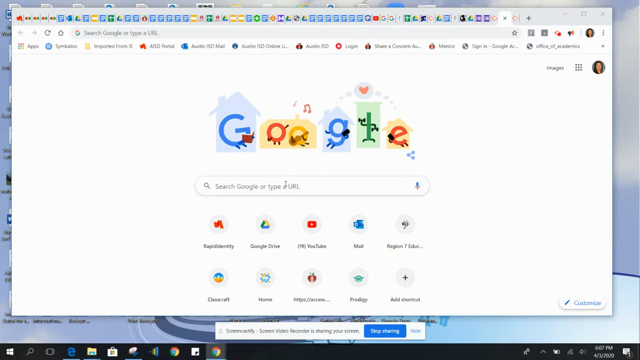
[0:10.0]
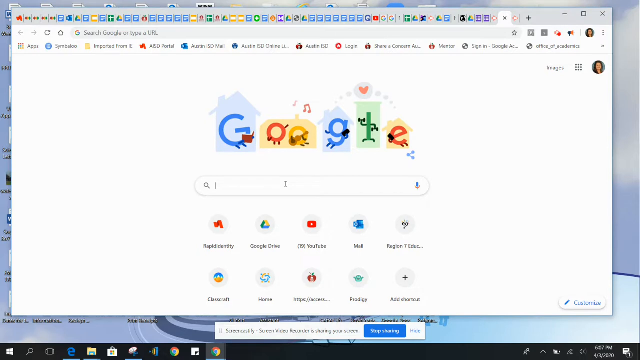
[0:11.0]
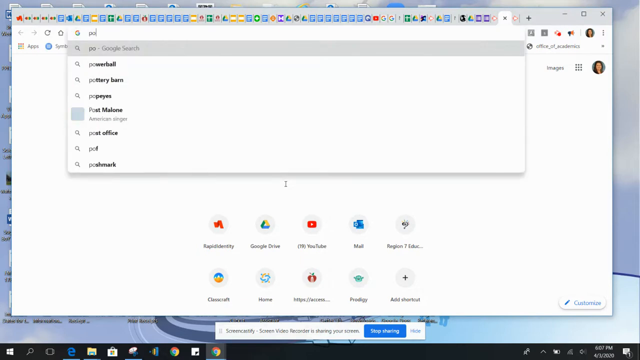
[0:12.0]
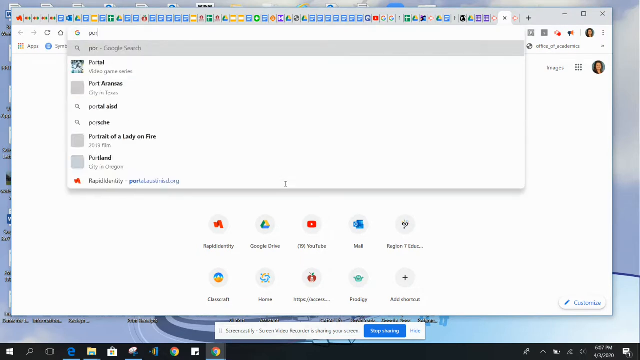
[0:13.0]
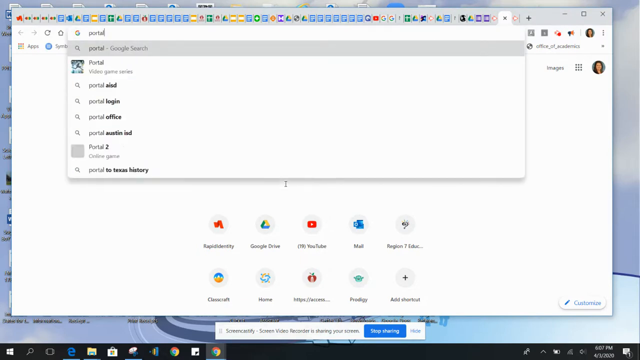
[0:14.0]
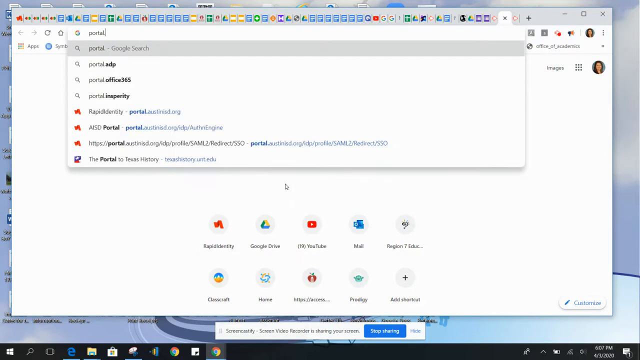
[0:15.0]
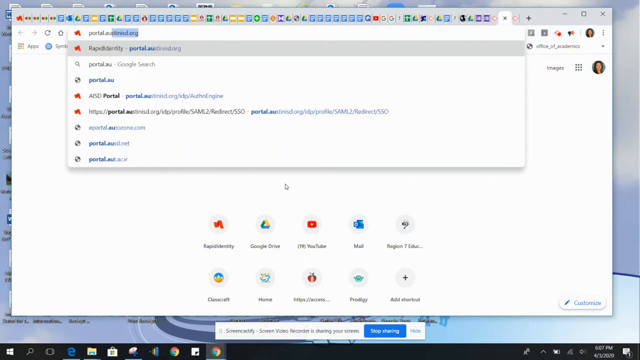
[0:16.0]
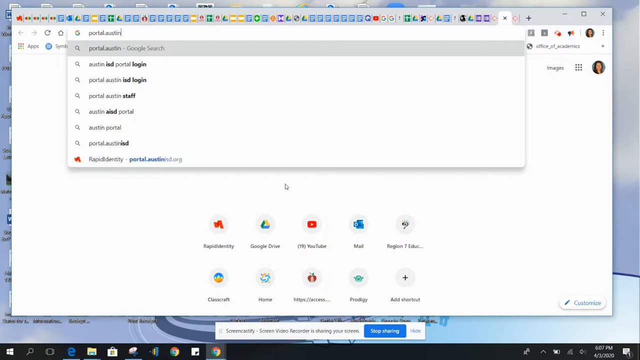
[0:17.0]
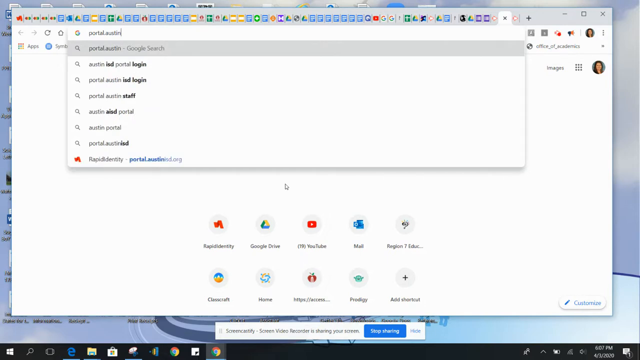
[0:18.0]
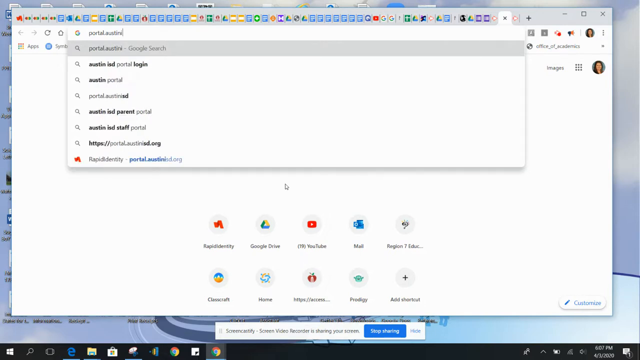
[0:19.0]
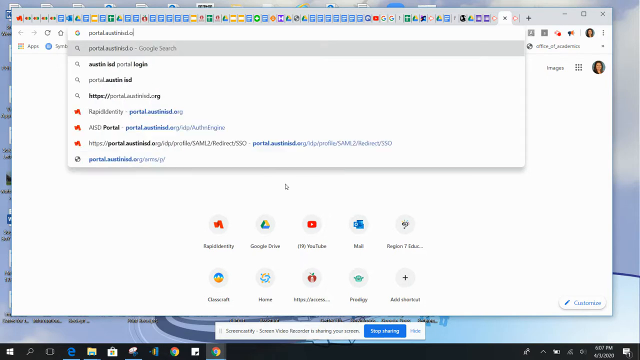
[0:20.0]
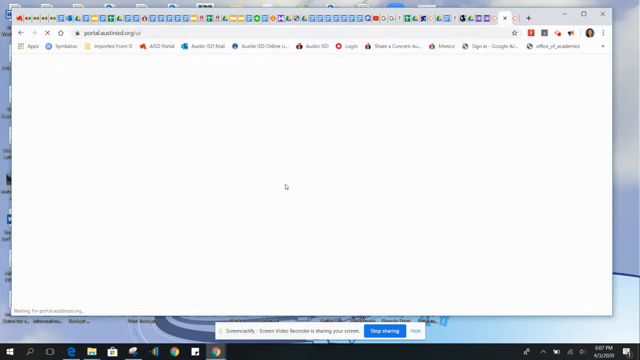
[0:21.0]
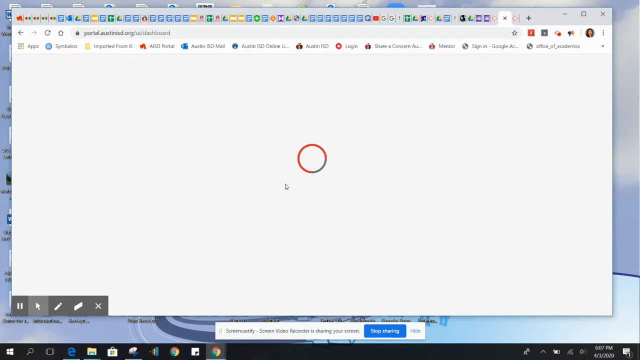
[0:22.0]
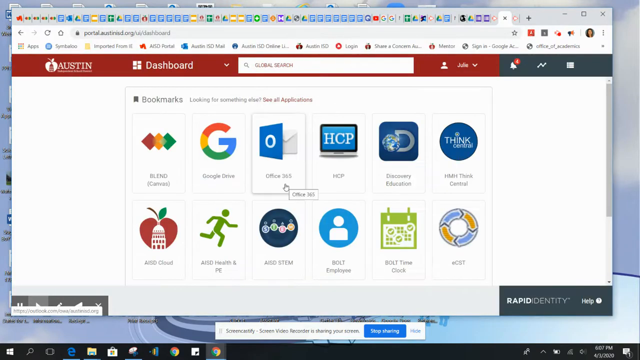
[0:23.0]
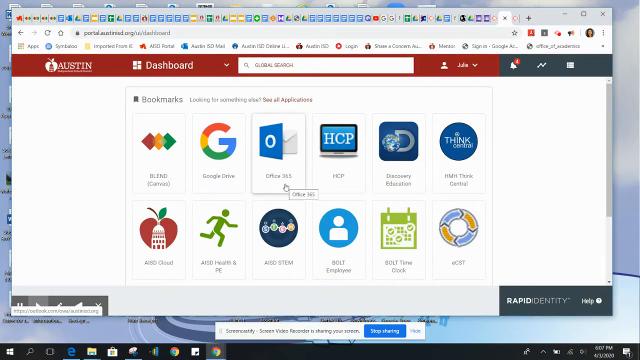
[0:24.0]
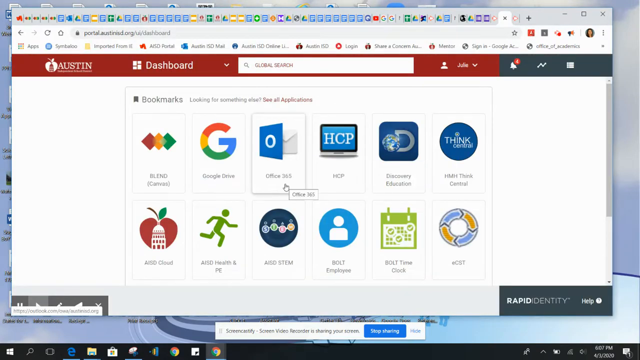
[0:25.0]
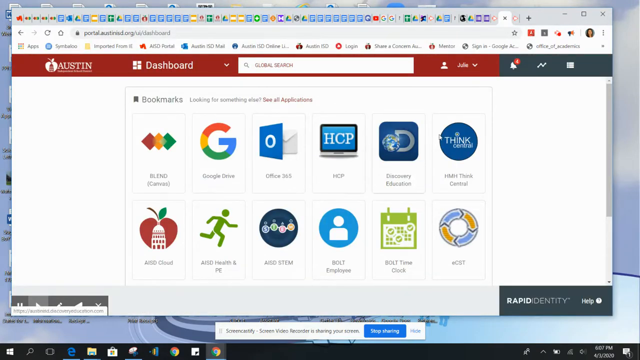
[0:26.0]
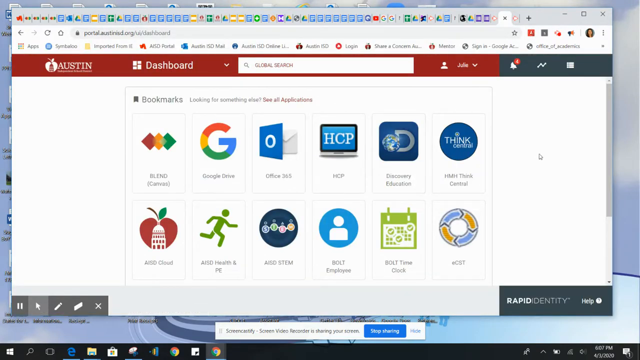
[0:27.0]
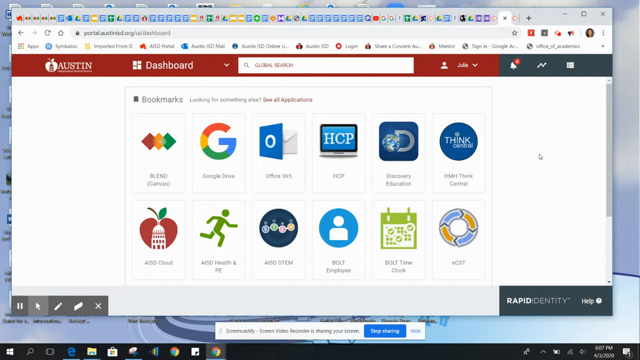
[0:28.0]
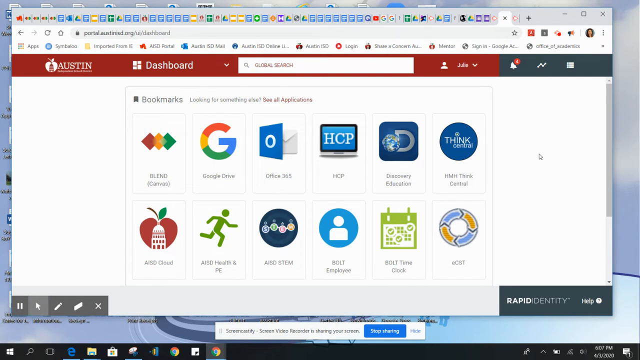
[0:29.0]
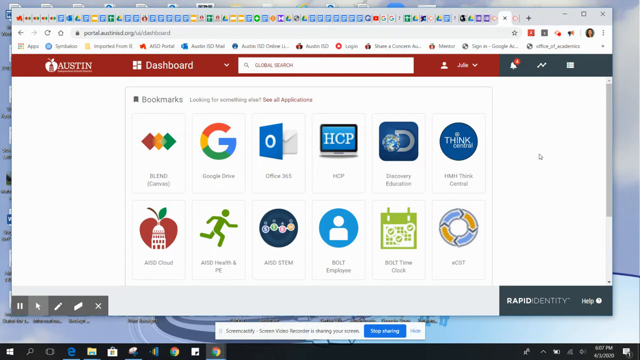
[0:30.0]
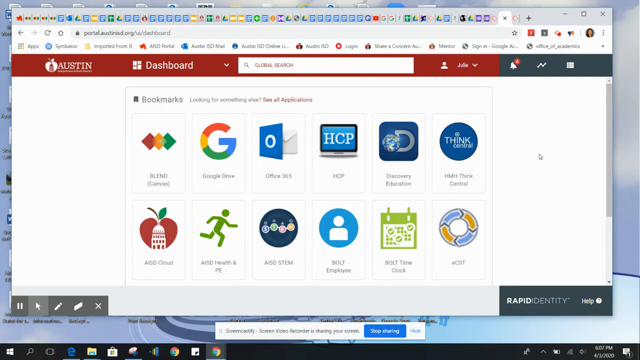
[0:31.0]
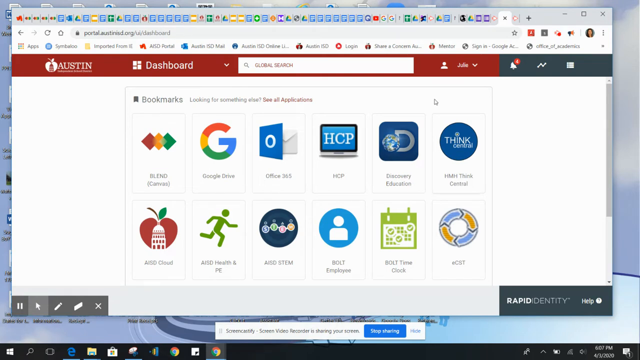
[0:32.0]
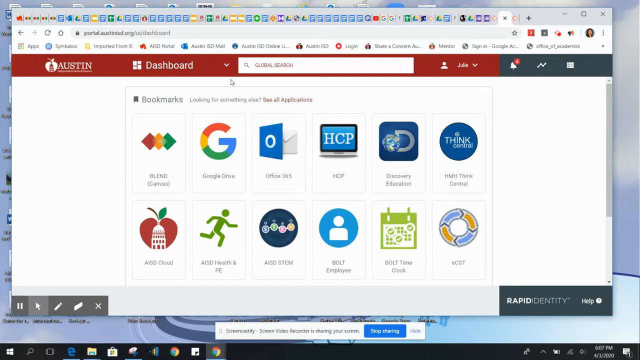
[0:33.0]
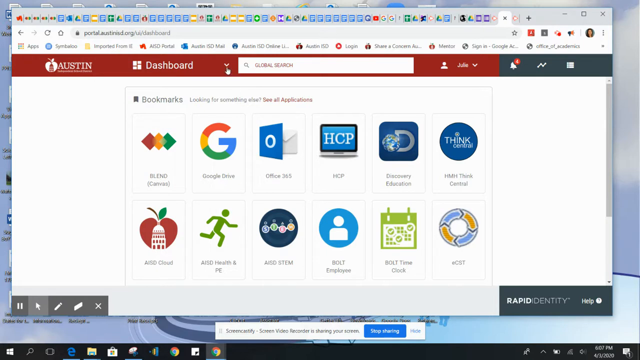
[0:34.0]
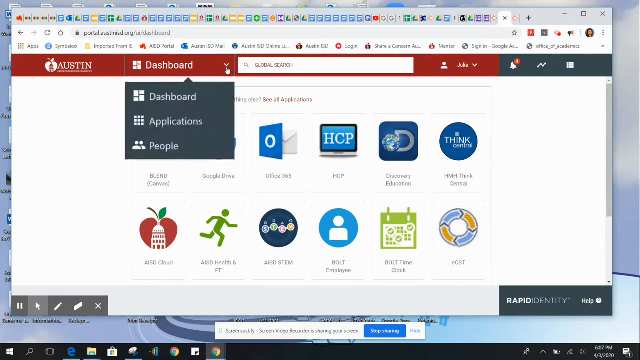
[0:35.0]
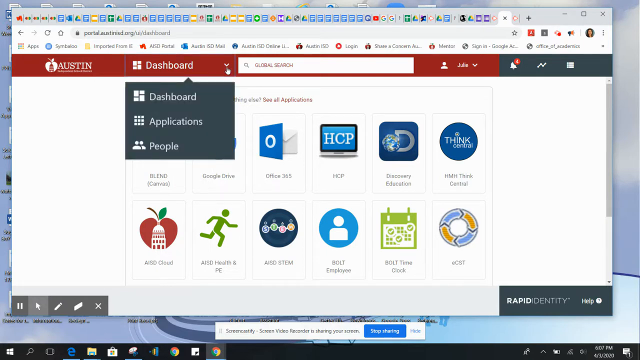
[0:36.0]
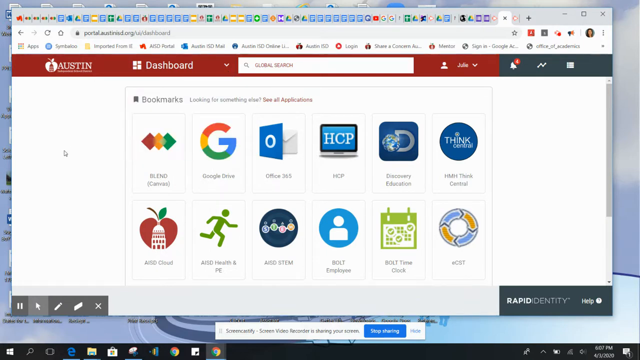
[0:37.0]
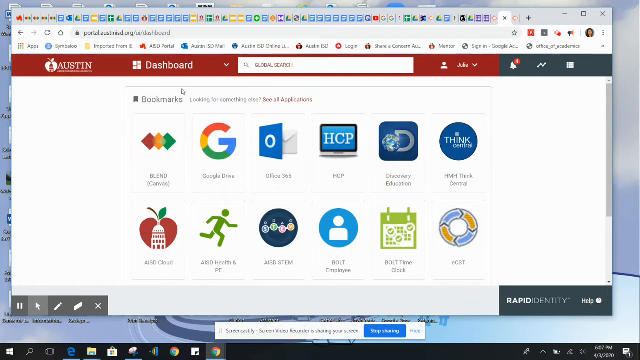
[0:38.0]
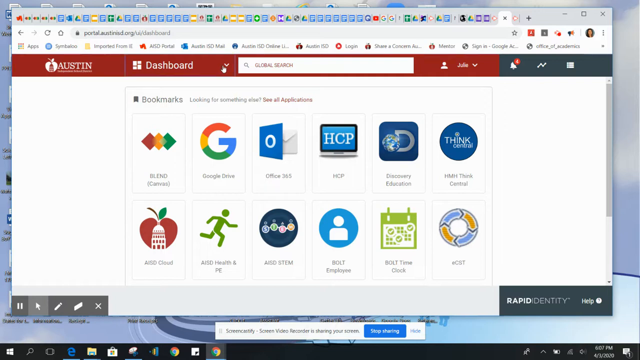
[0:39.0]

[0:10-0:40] In the same Google Chrome window with all the tabs open, the user is on the blank tab second from the right and types in the address bar; the text is hard to see, but it begins with "portal." and includes "austin" before ending in ".org". It looks like a university website for Austin University. When it loads, there is a red navigation bar at the top that says "Austin", with a dashboard item with a down arrow, a search, a username dropdown that says "Julia", a notification bell showing four notifications, and two icons to the right of that. The first page says "bookmarks" and shows two rows of six bookmarks, twelve in total, each with its own icon. From left to right they include Blend, Canvas, Google Drive, Office 365, HCP, Discovery Education, Bing Central, Health and PE, STEM, Bolt Employee, Bolt Time Check, and eCFT. The mouse moves around before clicking on the dashboard, and the dropdown lists dashboard, applications, and people, each with a small icon next to it. The user clicks off, then clicks the dropdown again.